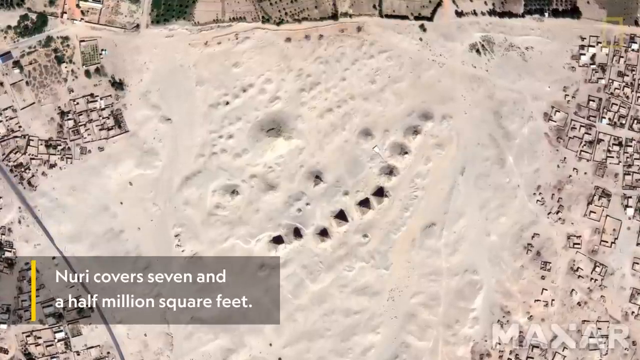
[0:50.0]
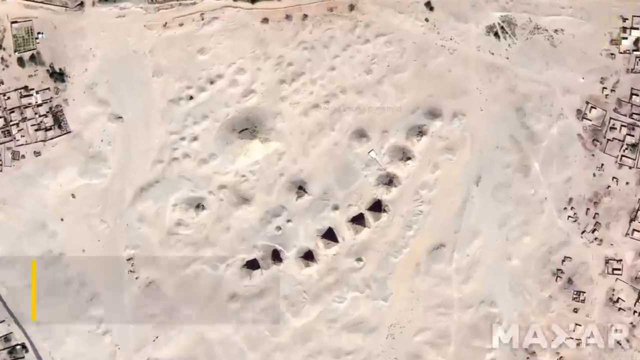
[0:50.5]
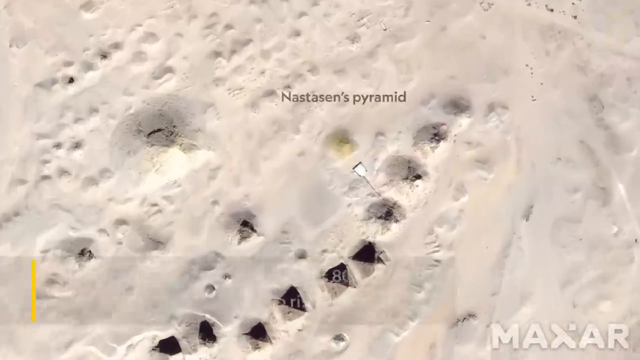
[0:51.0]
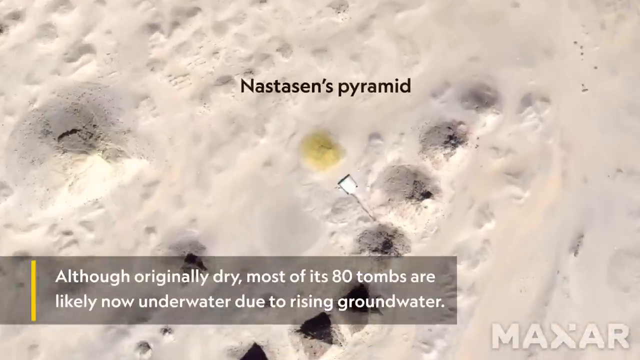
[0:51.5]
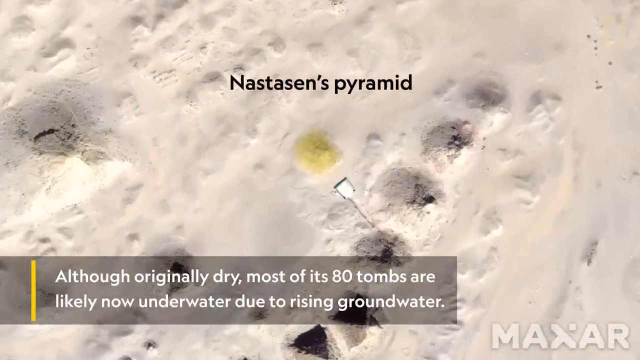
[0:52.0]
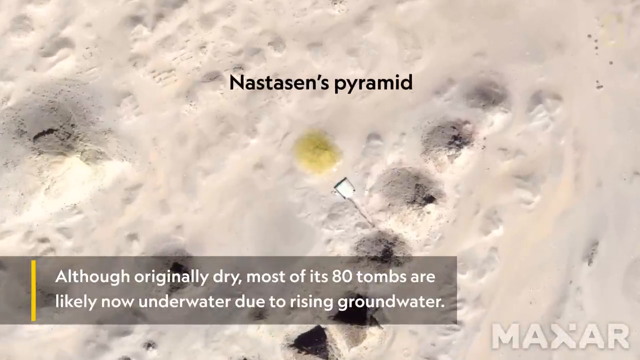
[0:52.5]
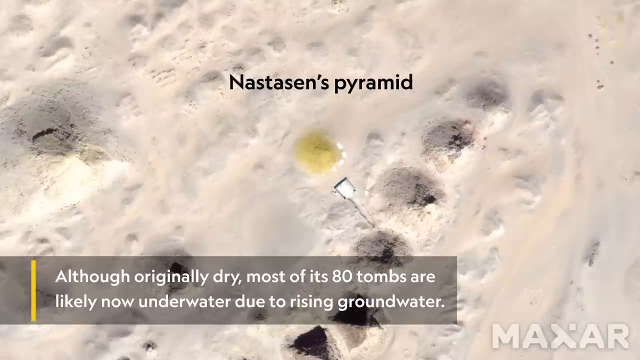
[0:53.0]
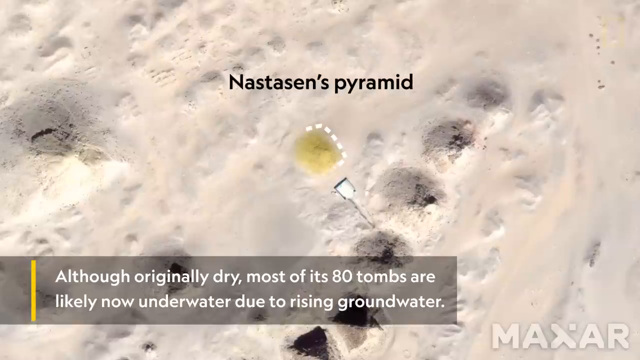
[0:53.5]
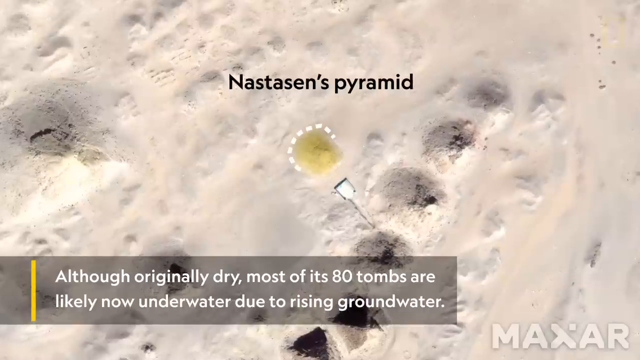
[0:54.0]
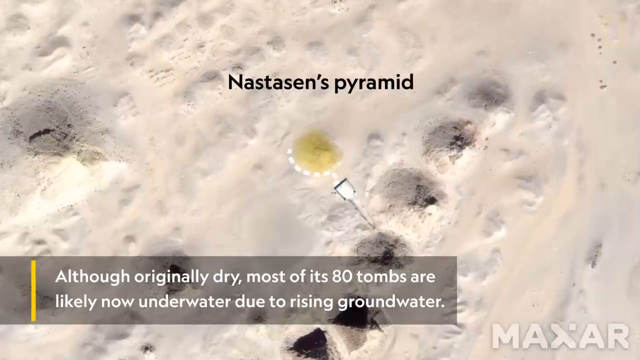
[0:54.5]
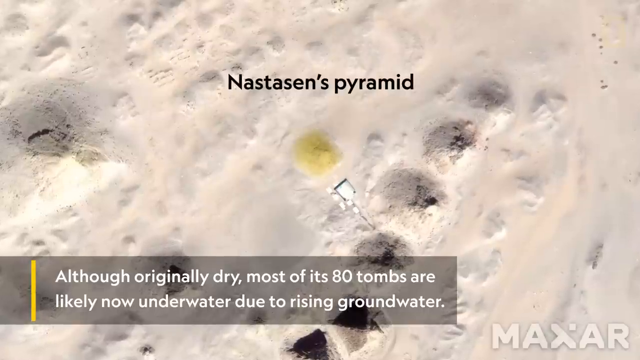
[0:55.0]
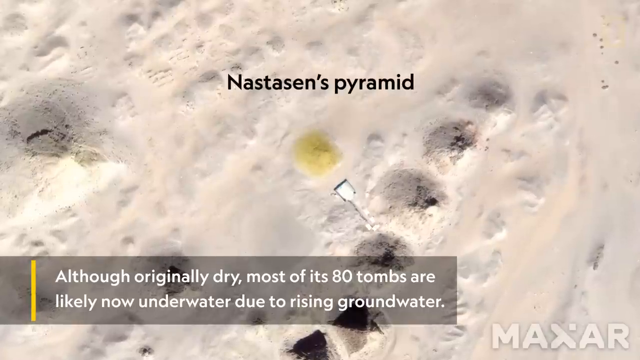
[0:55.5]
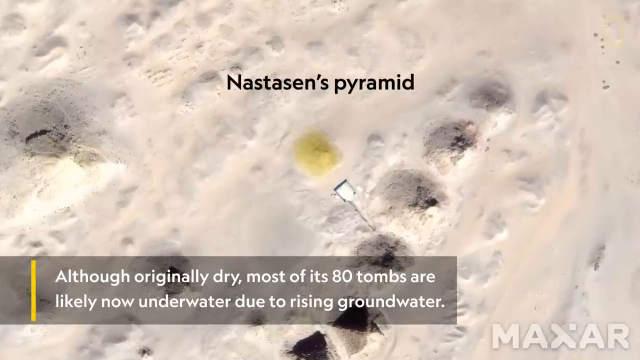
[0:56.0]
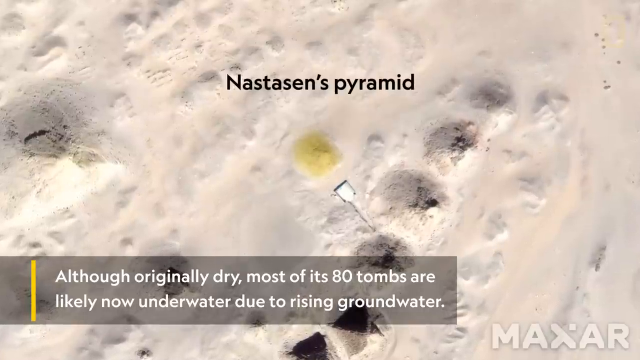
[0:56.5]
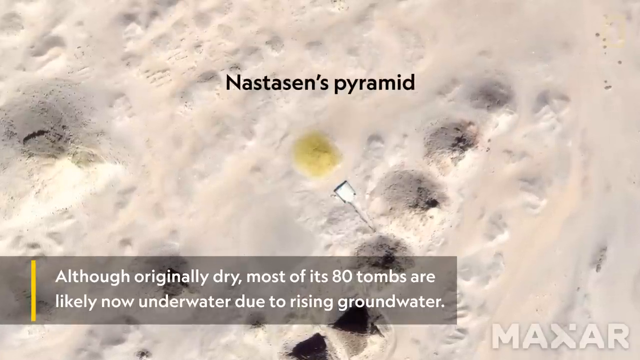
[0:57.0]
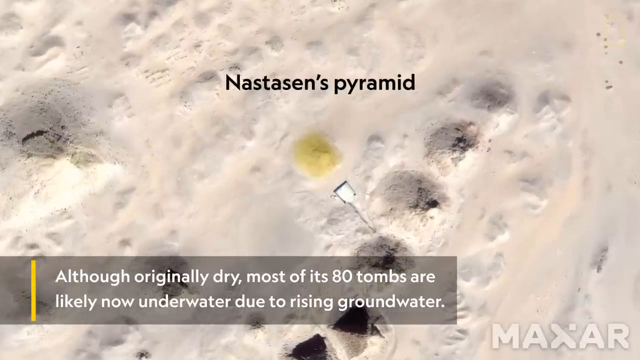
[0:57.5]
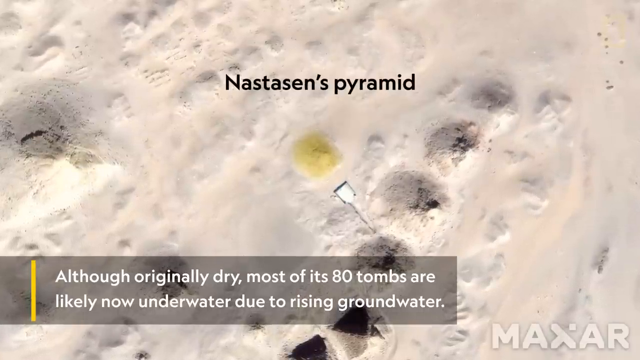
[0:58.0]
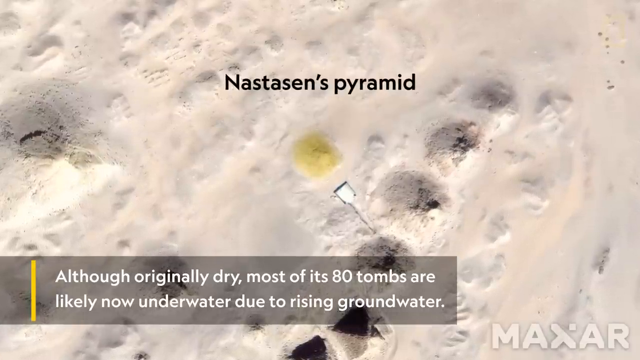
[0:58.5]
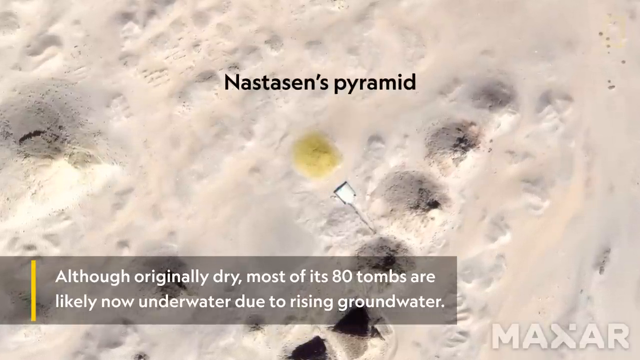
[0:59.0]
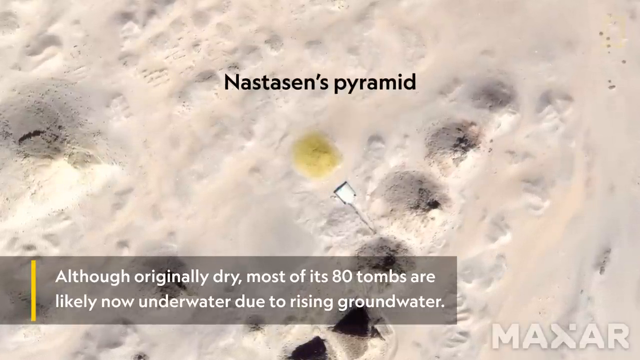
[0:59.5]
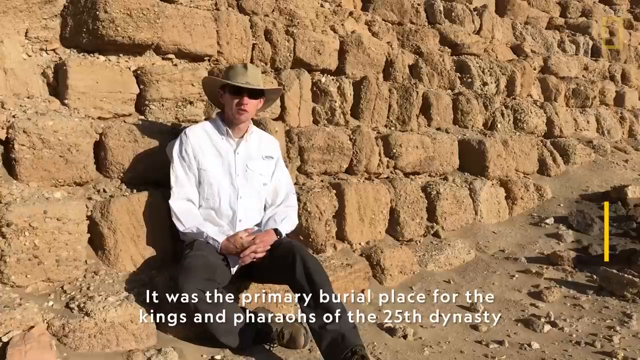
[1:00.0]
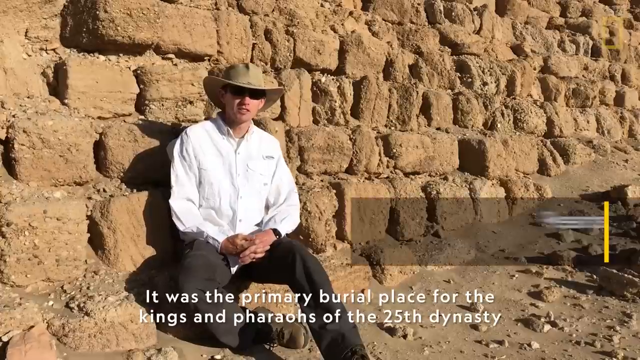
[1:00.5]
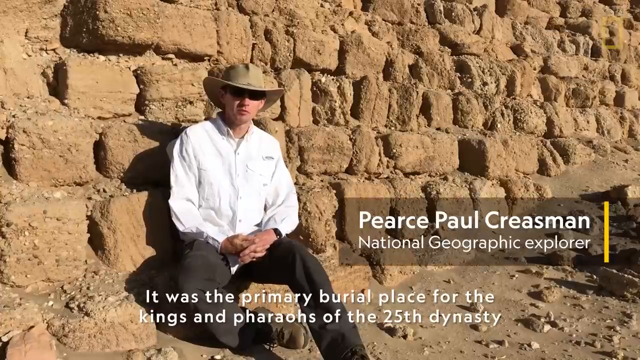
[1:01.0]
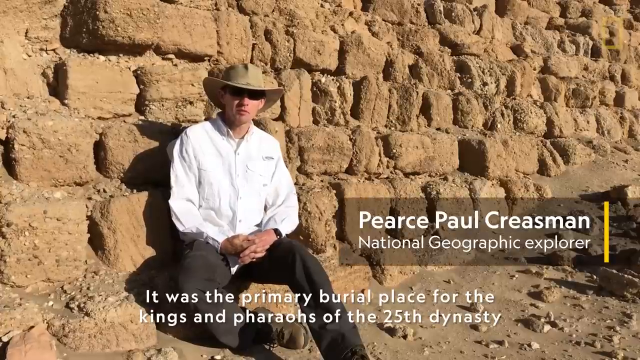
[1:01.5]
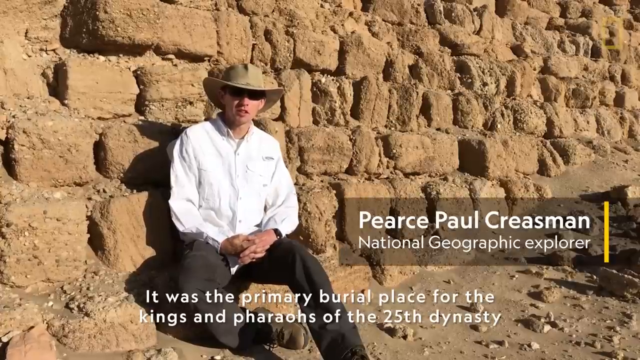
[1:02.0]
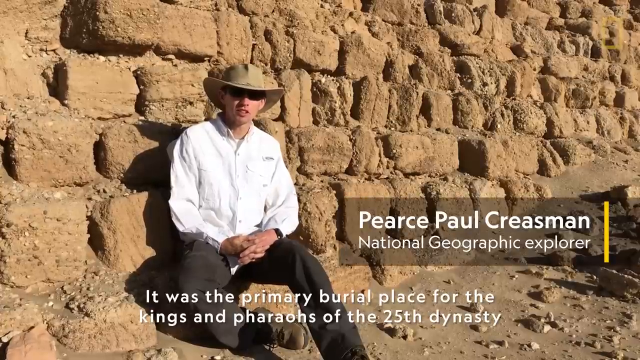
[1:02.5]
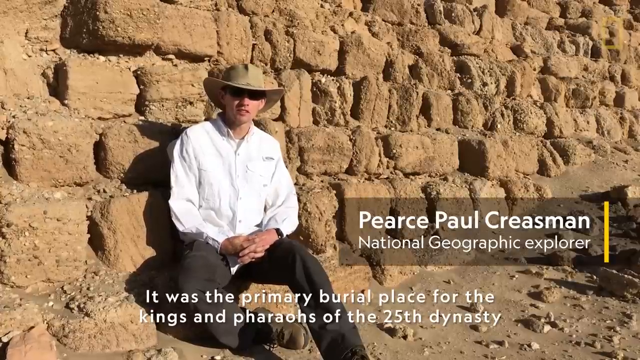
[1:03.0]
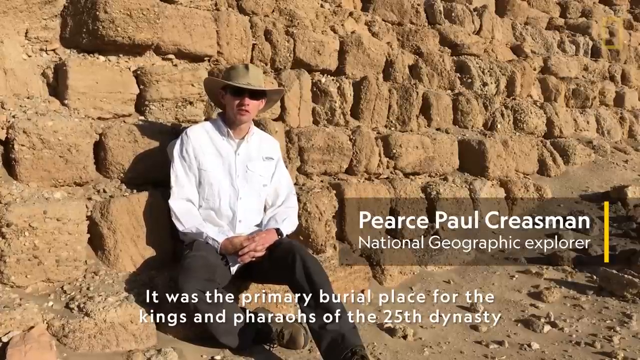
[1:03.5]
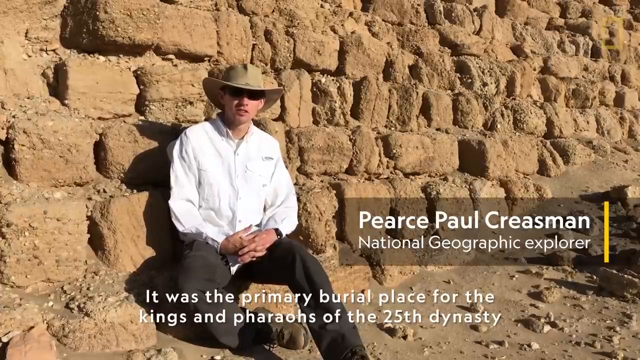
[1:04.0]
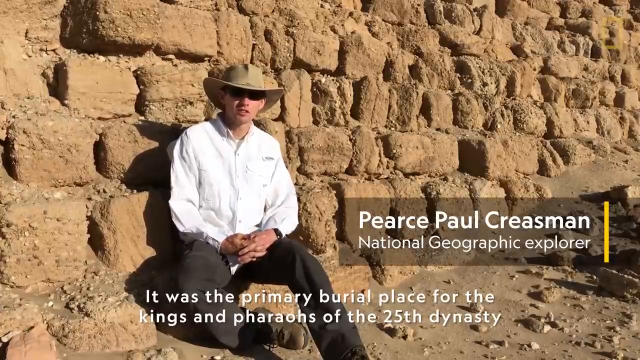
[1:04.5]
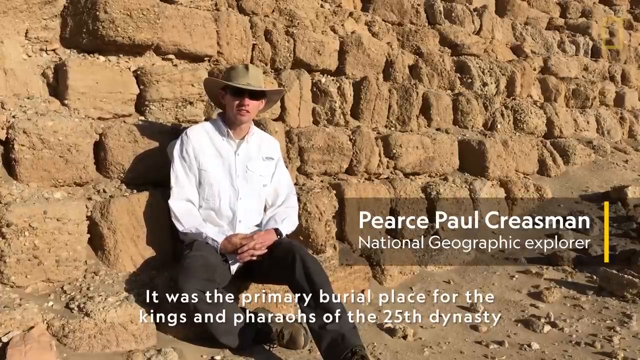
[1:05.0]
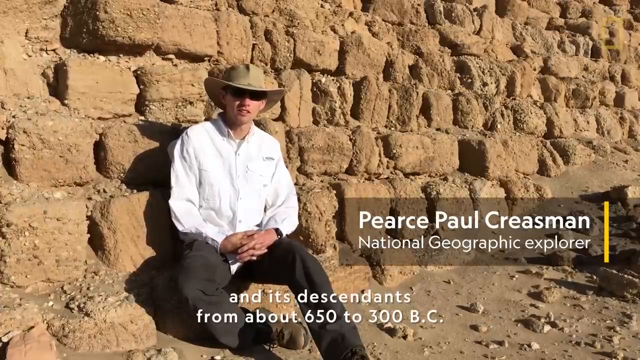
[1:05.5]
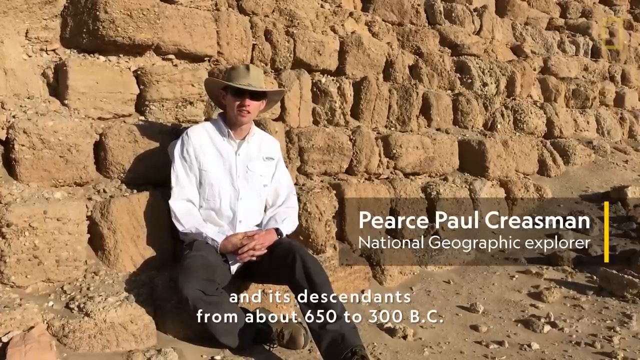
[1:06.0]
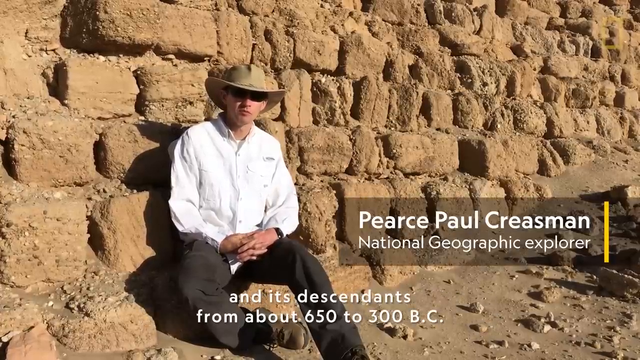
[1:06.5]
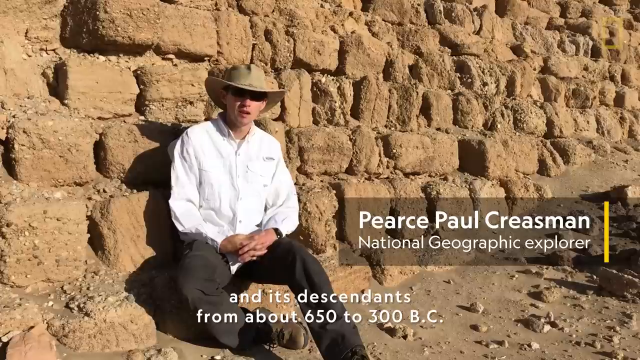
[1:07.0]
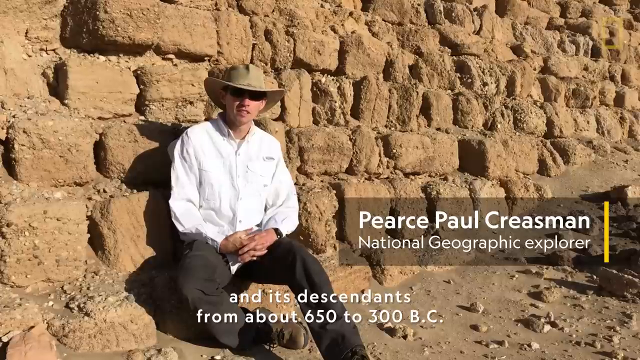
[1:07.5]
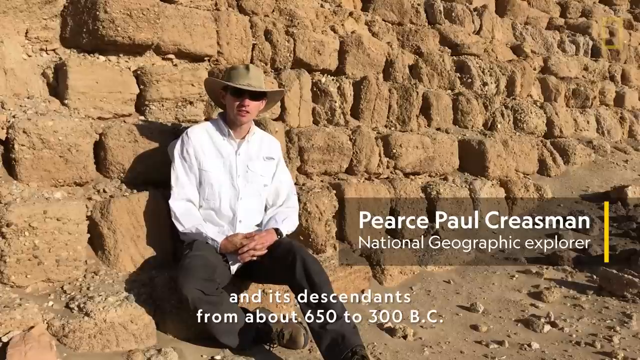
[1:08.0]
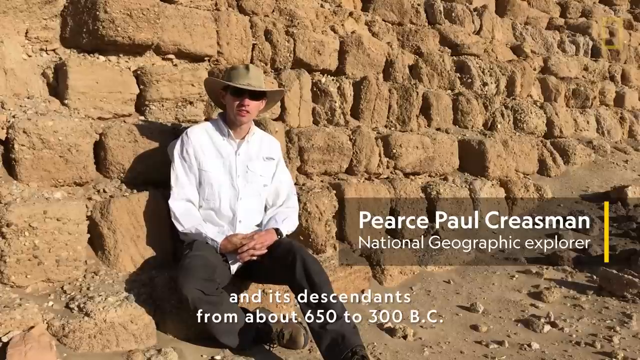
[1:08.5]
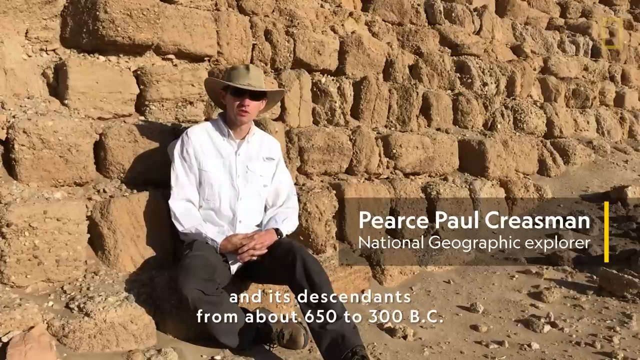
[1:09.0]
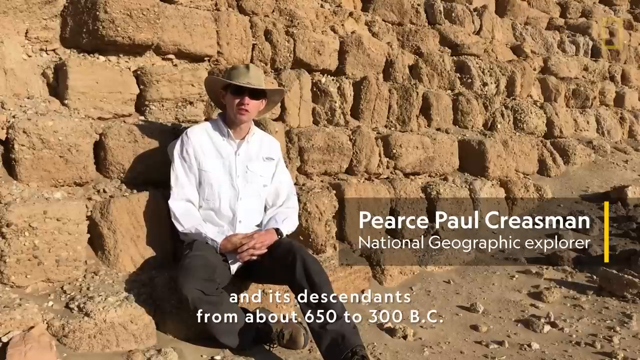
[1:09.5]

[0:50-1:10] A caption says that "the majority of the tombs in this area have been left undisturbed for 2,000 years." The team is going out to study Nastian's Pyramid. Explorer Pierce, a Caucasian man, wears a Panama Jack style hat, a white shirt, what look like brown or gray khaki pants, boots, and black glasses. He speaks to the viewers, explaining what is about to happen during the exploration.